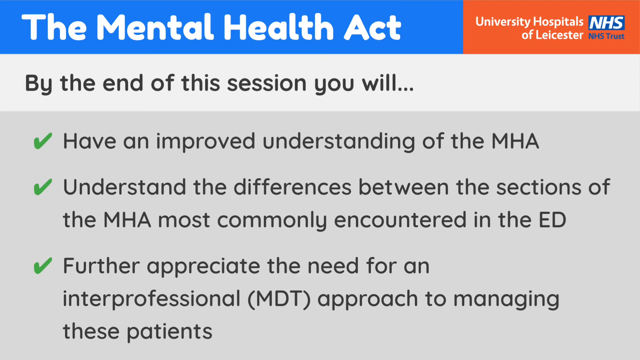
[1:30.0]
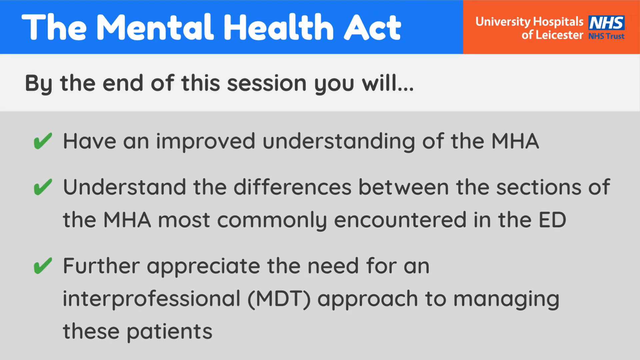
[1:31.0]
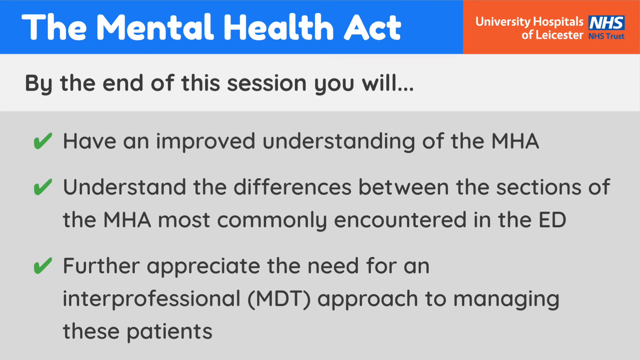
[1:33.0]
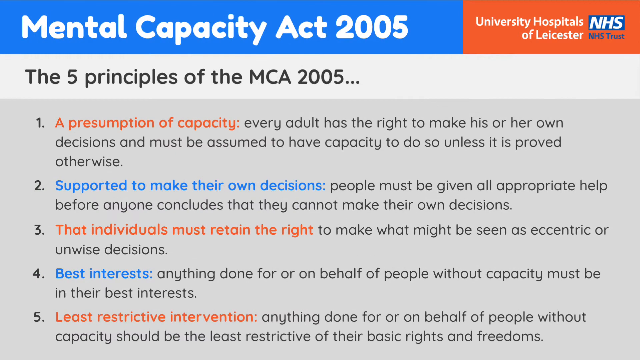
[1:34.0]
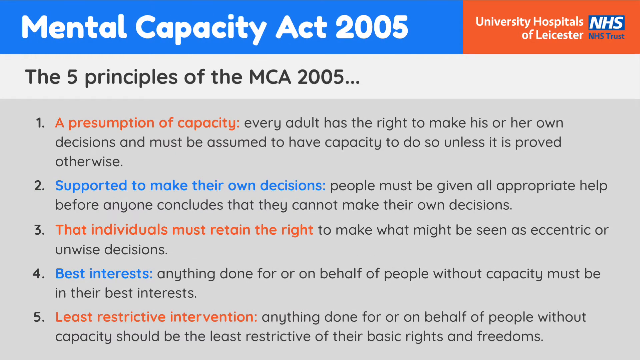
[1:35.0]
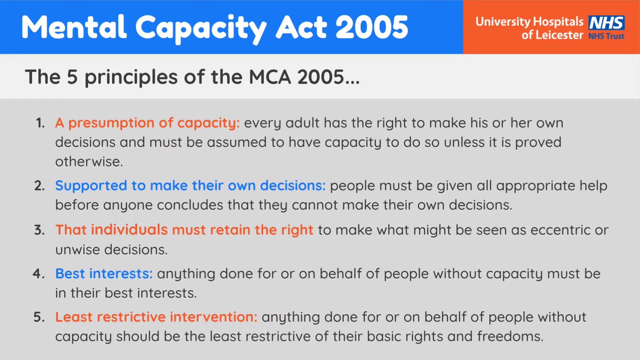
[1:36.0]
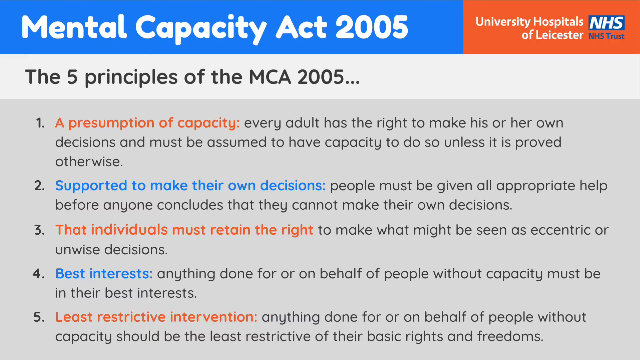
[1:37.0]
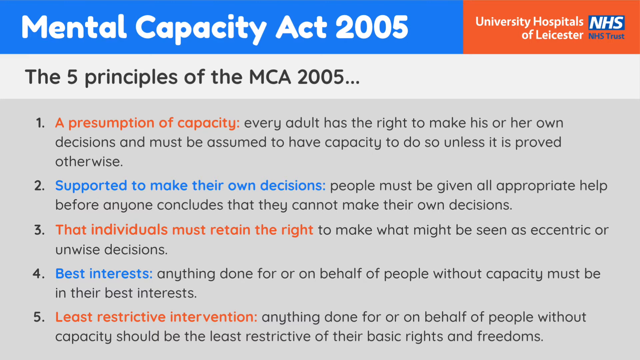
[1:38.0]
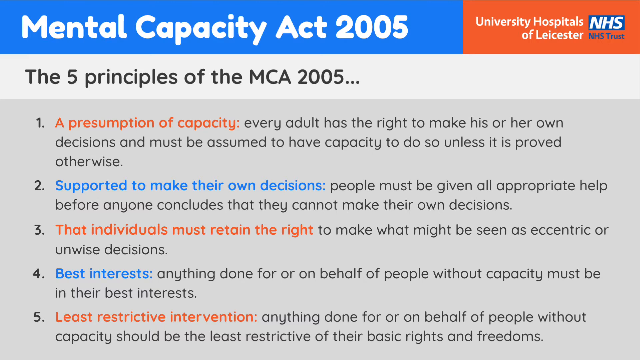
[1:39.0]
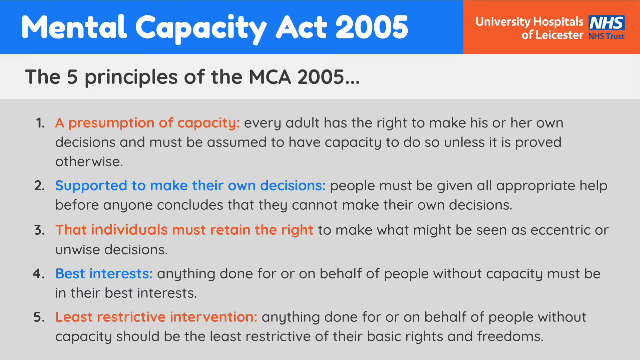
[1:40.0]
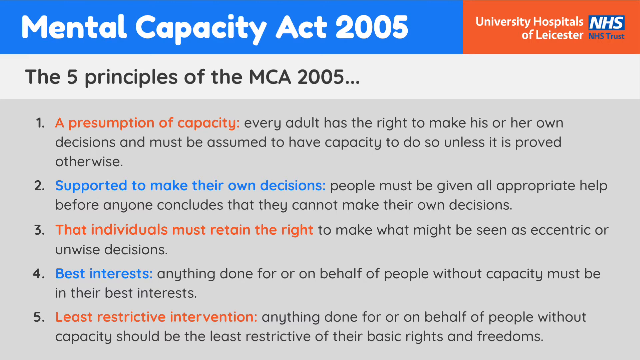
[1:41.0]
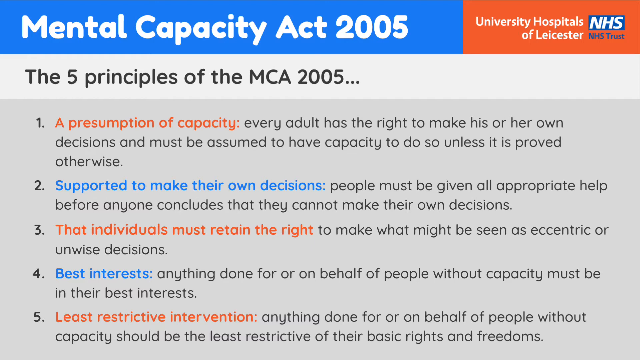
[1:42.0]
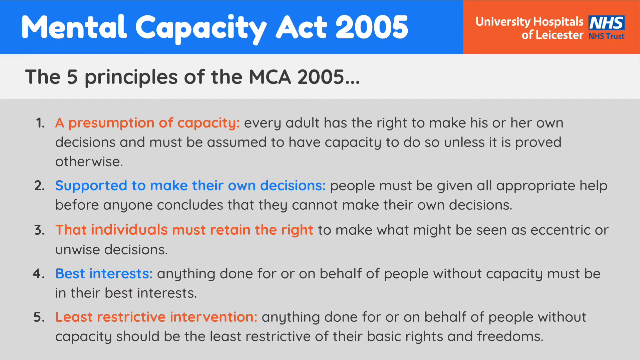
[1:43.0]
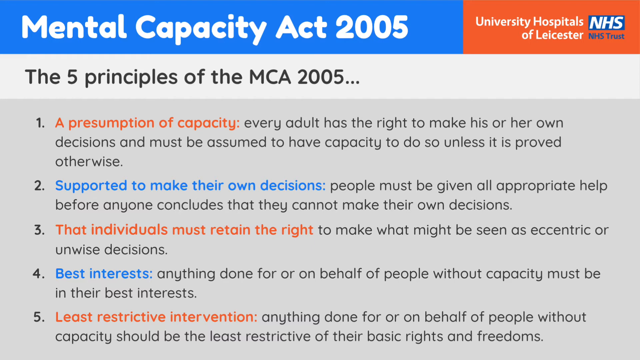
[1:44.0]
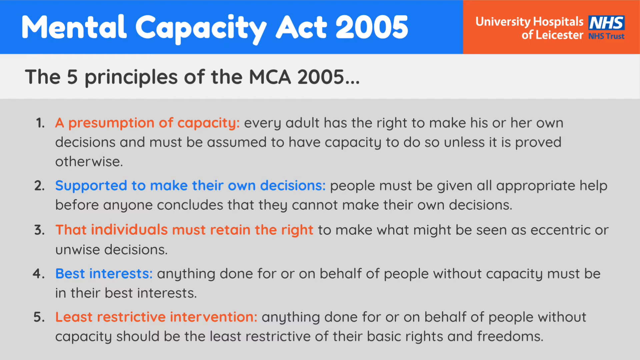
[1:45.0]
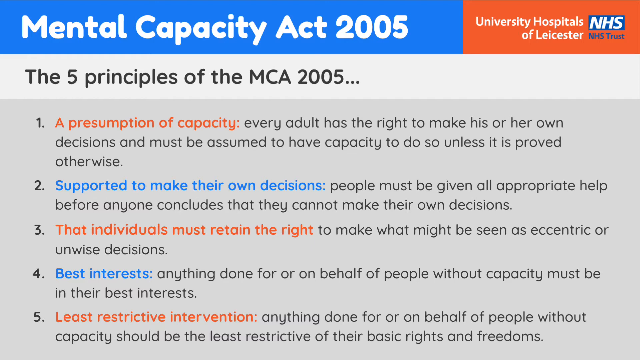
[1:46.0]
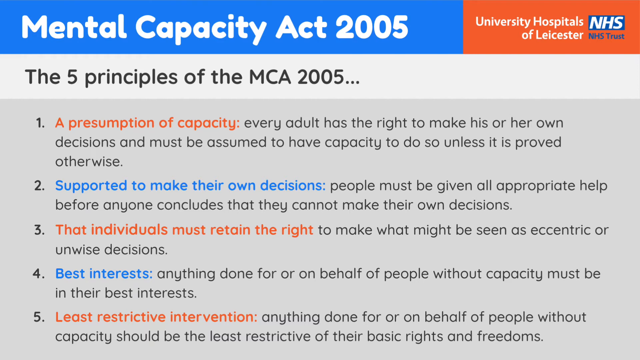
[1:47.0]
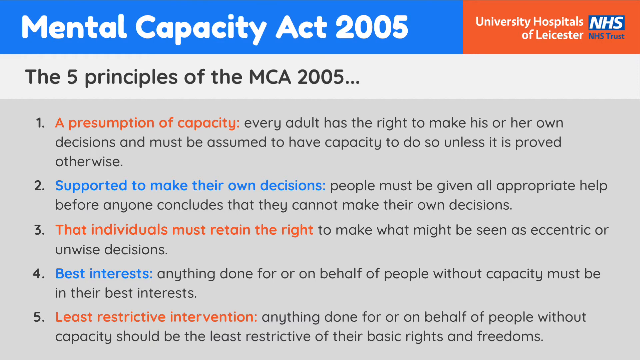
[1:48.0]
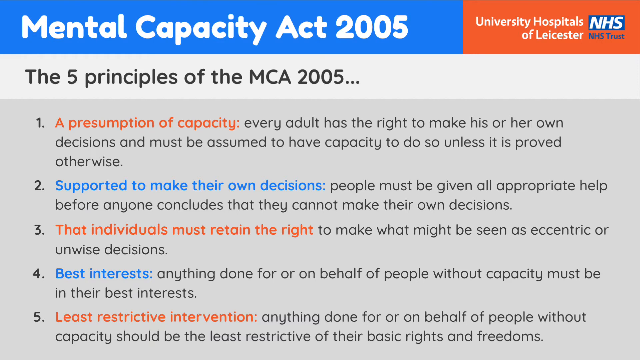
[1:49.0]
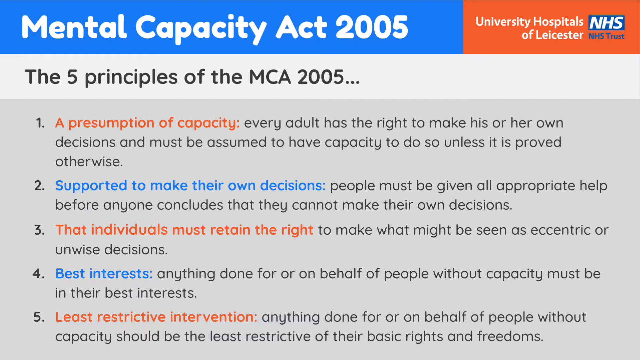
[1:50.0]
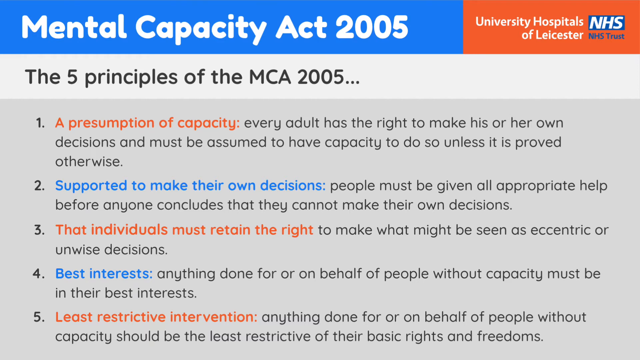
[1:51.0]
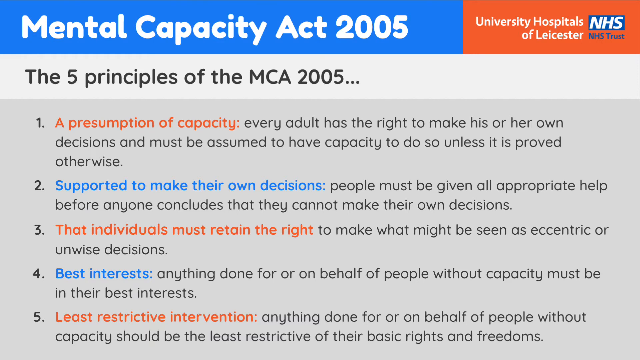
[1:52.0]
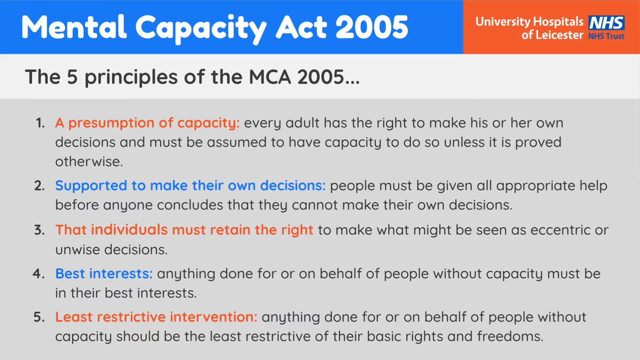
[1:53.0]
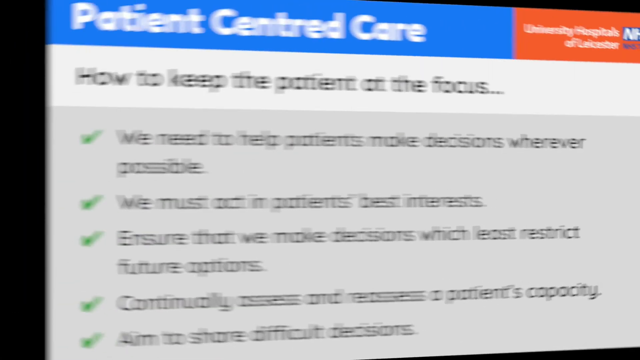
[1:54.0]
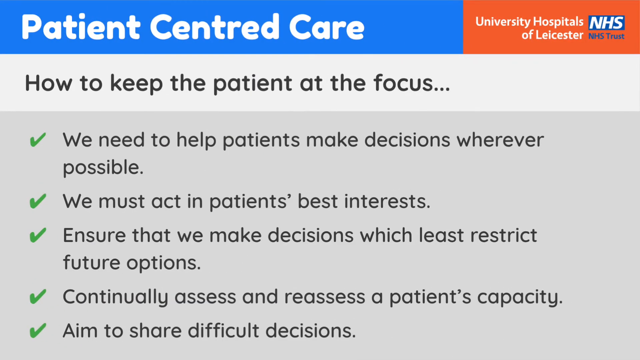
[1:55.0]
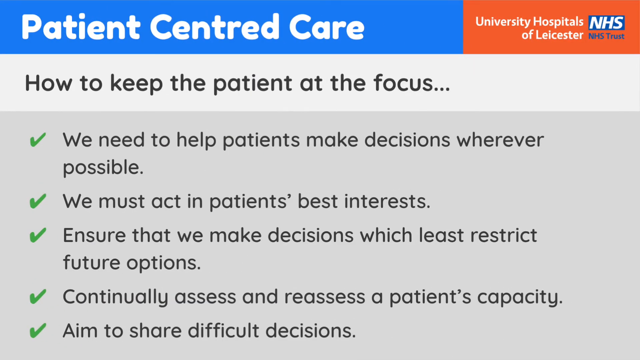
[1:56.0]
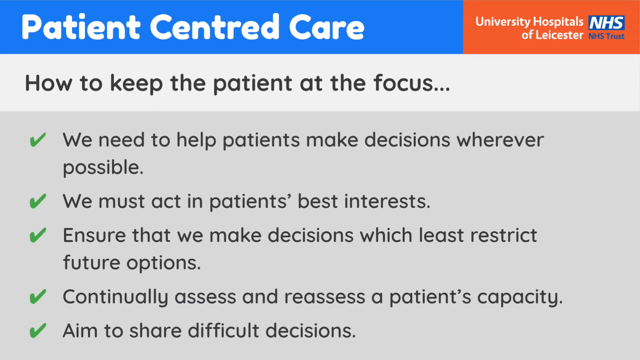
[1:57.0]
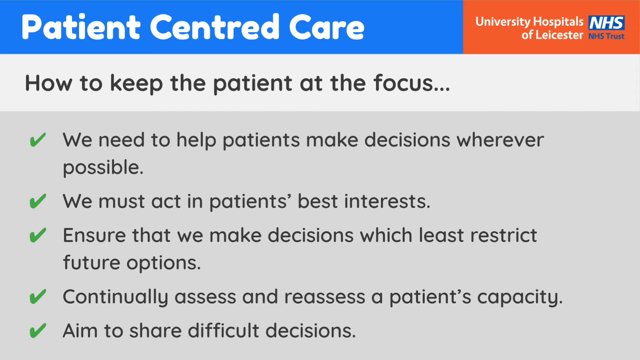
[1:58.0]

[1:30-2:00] Pages cover the Mental Health Act as taught to people in the ED. A page on the Mental Capacity Act 2005 lists five principles, numbered one through five, with the keywords written in orange and blue to differentiate them from the explanations: presumption of capacity, supported to make their own decisions, individuals must retain the right, best interest, and, as number five, least restrictive intervention. A page on patient-centered care, how to keep the patient at the focus, lists items with green check marks next to each one in a shaded gray area. Another page lists what participants will be able to do by the end of the session, including understanding the differences in behavior with a patient having a mental health crisis. The material is from the University Hospitals of Lancaster.